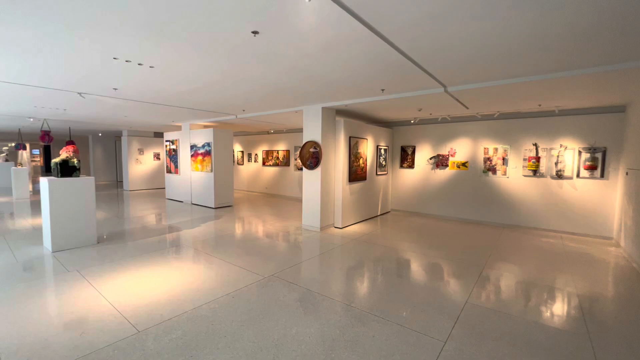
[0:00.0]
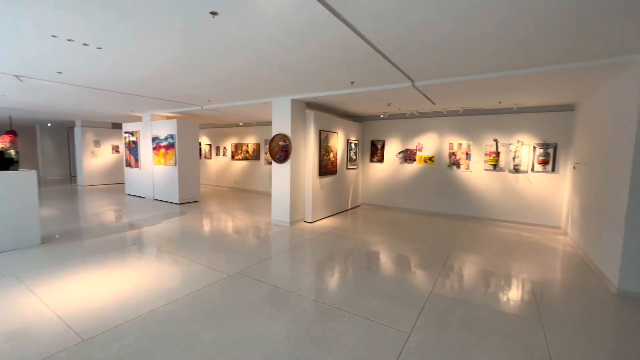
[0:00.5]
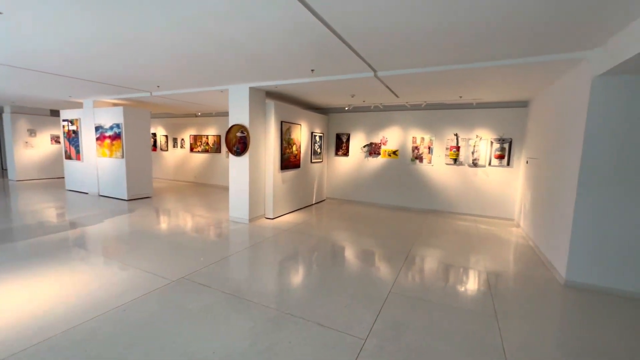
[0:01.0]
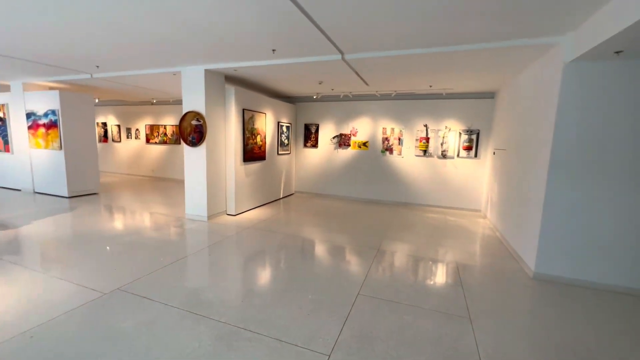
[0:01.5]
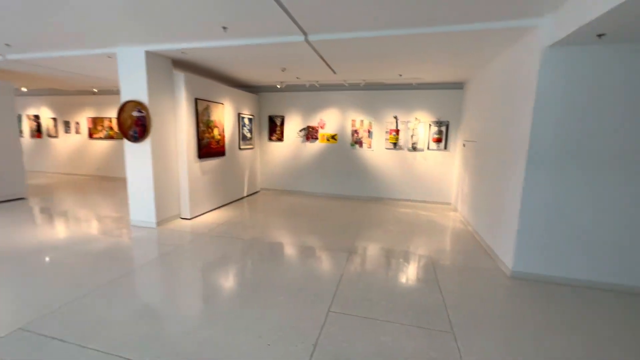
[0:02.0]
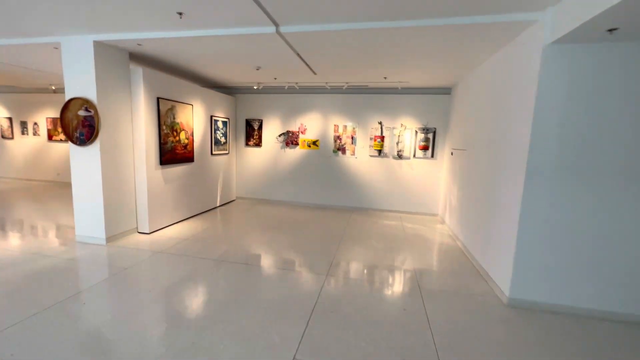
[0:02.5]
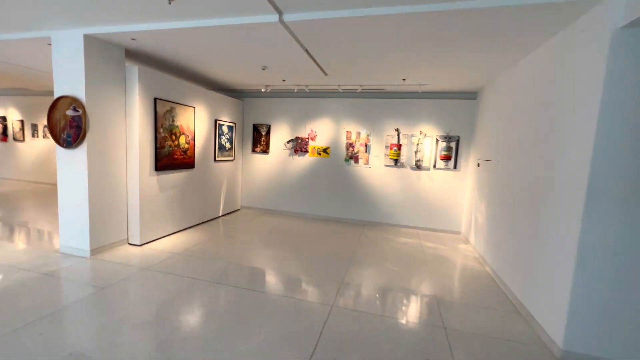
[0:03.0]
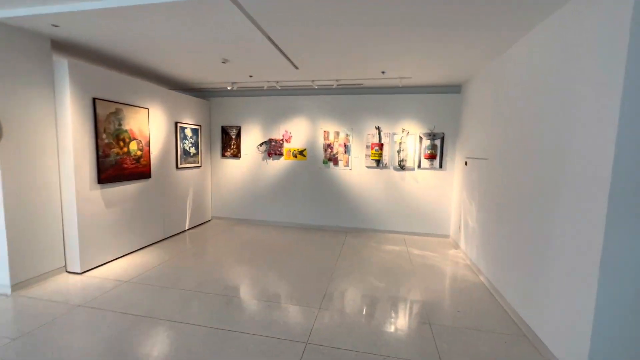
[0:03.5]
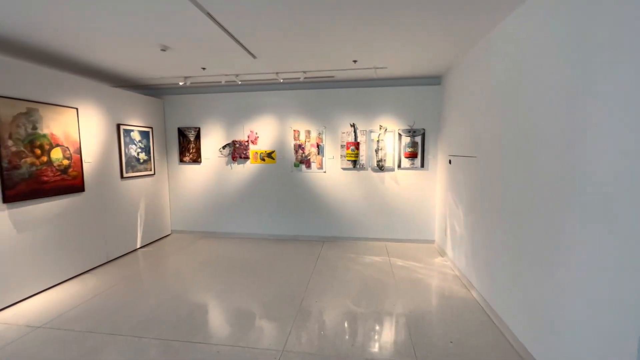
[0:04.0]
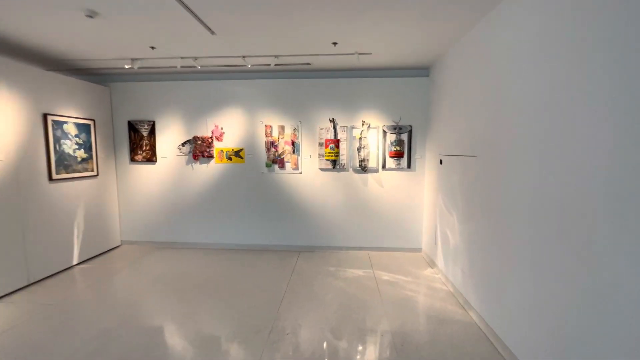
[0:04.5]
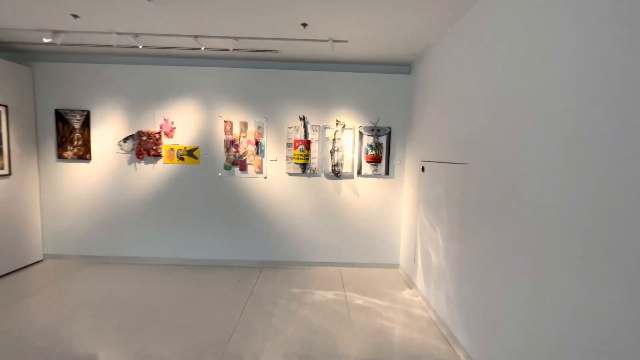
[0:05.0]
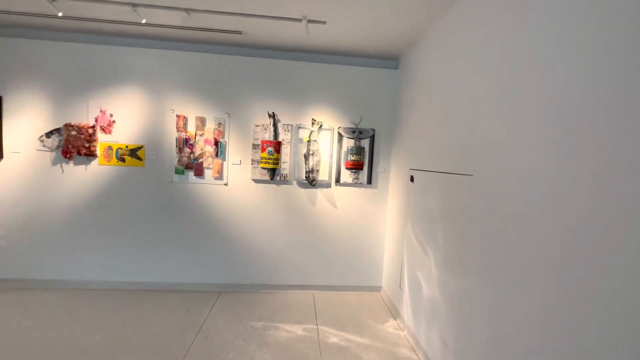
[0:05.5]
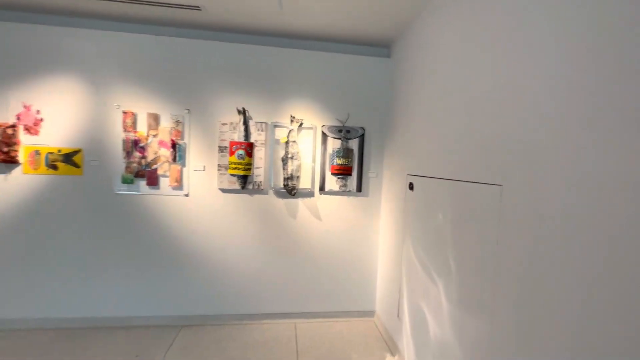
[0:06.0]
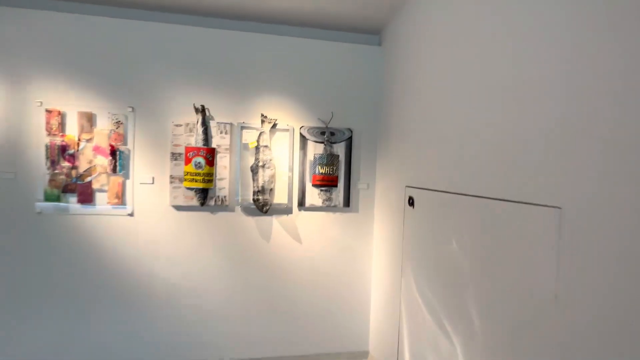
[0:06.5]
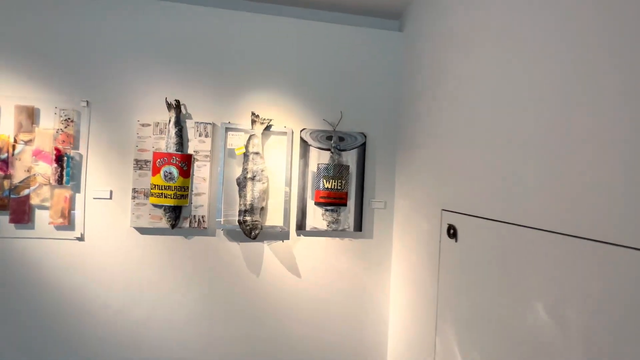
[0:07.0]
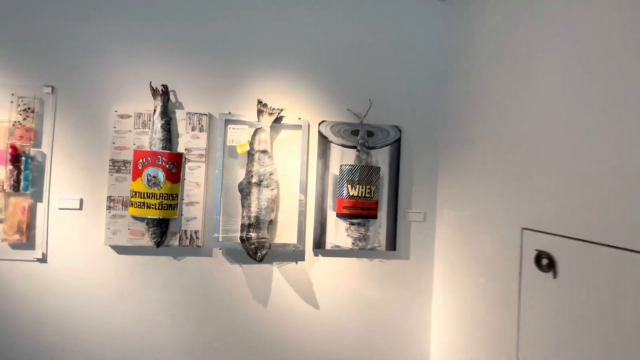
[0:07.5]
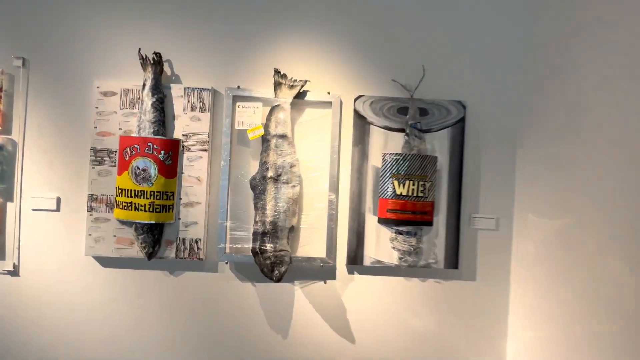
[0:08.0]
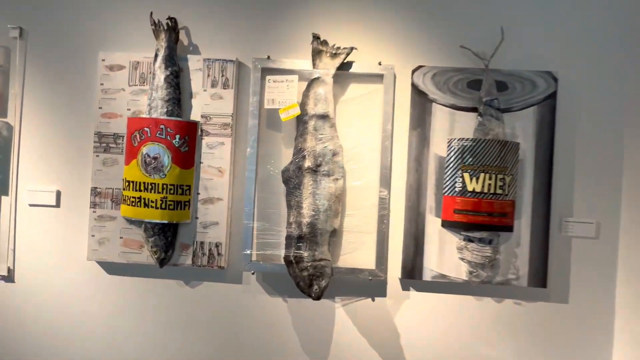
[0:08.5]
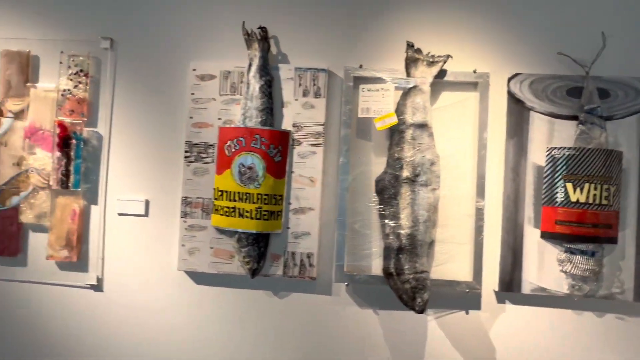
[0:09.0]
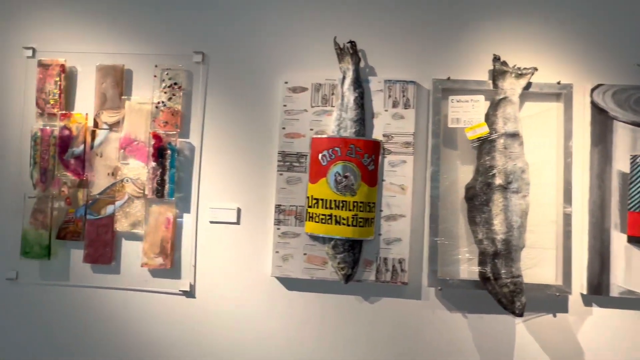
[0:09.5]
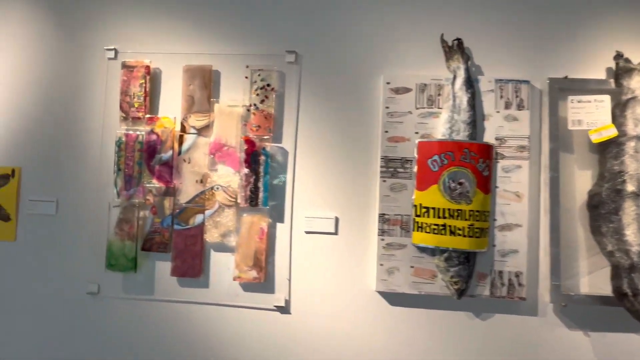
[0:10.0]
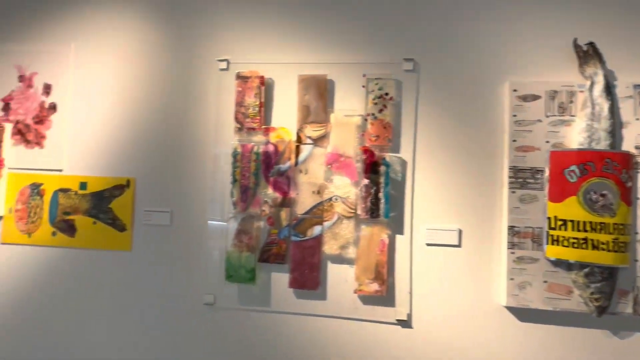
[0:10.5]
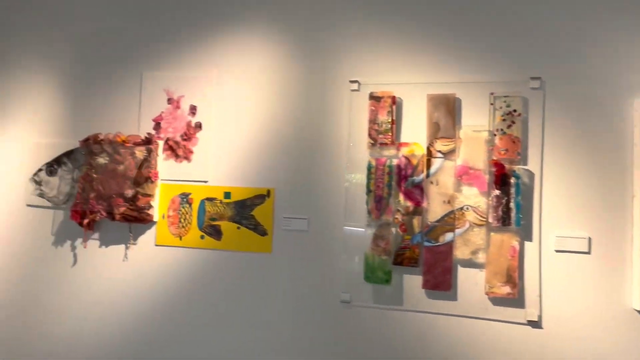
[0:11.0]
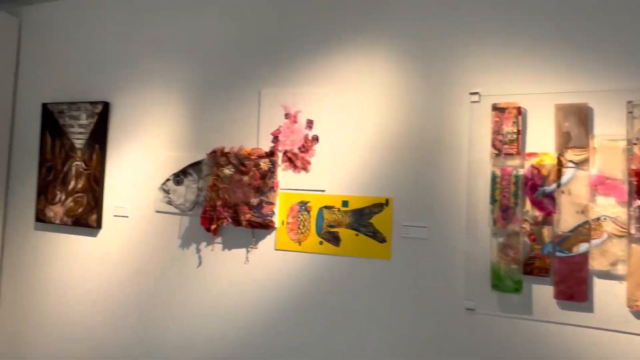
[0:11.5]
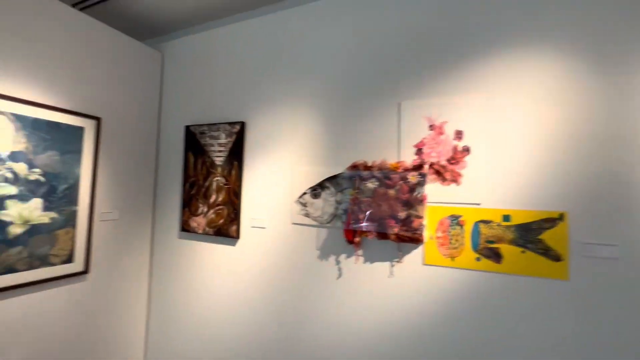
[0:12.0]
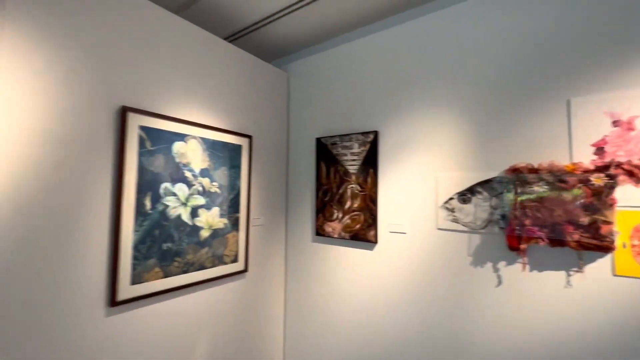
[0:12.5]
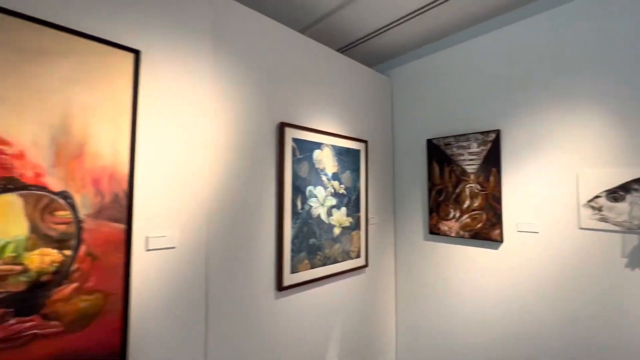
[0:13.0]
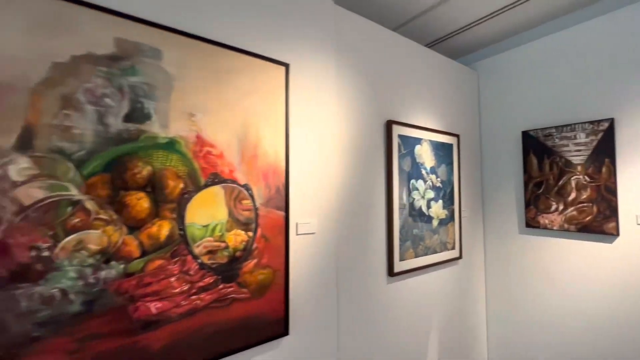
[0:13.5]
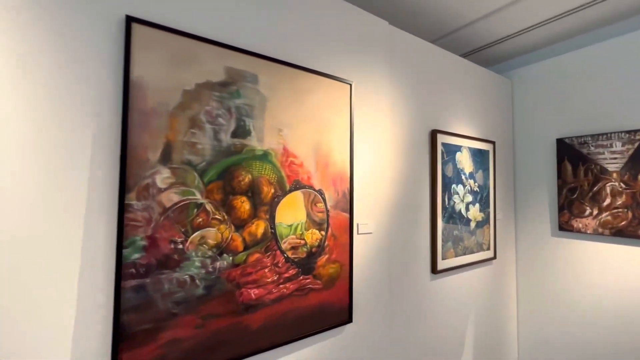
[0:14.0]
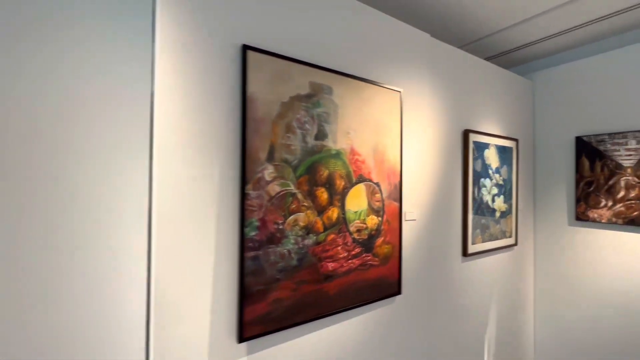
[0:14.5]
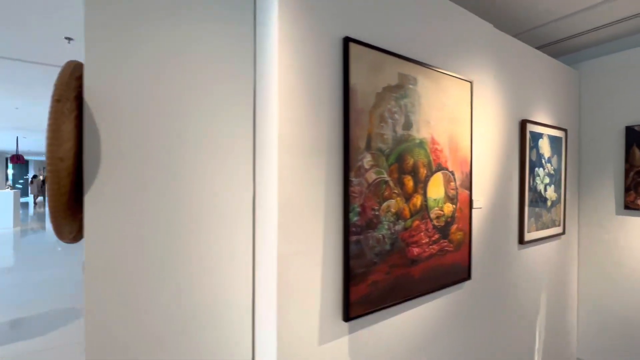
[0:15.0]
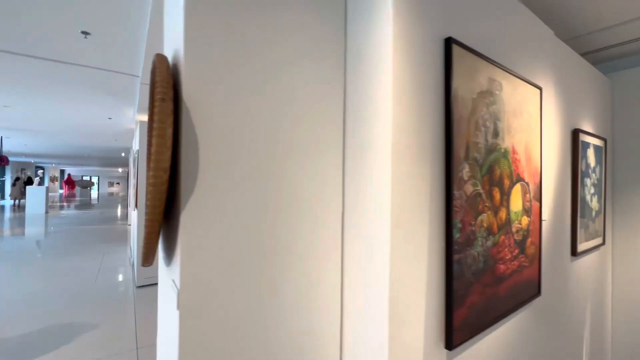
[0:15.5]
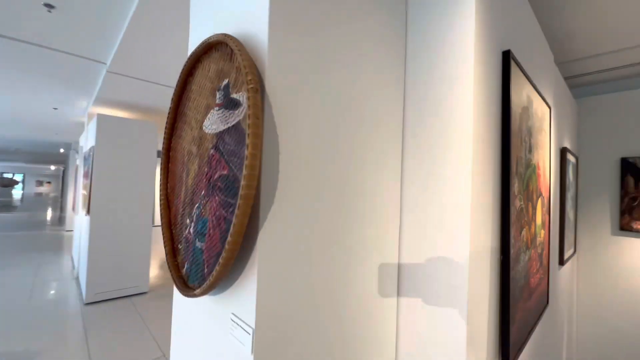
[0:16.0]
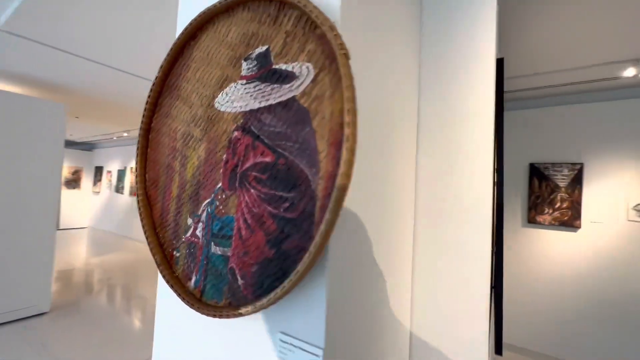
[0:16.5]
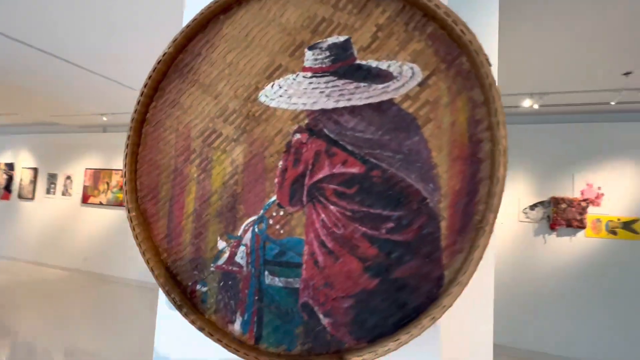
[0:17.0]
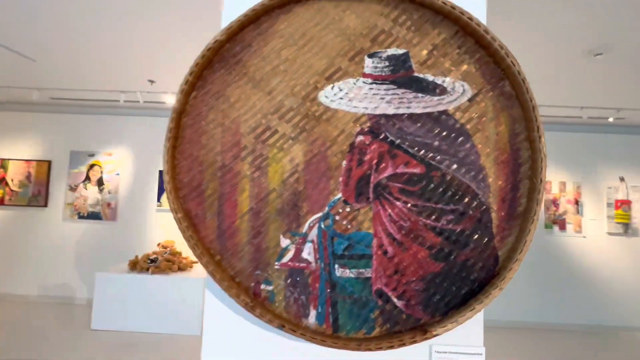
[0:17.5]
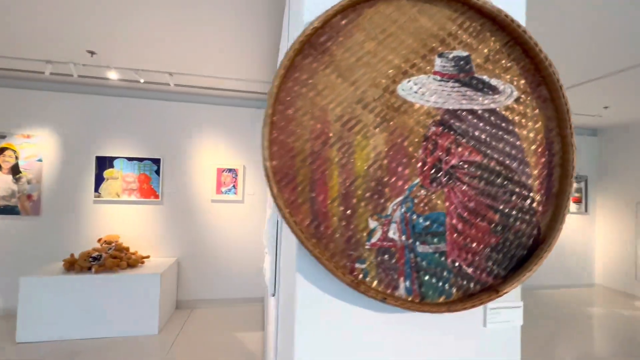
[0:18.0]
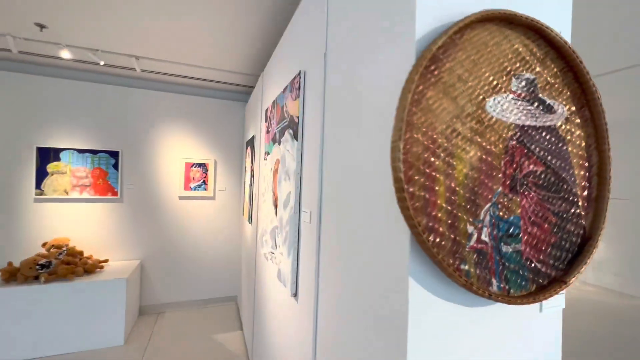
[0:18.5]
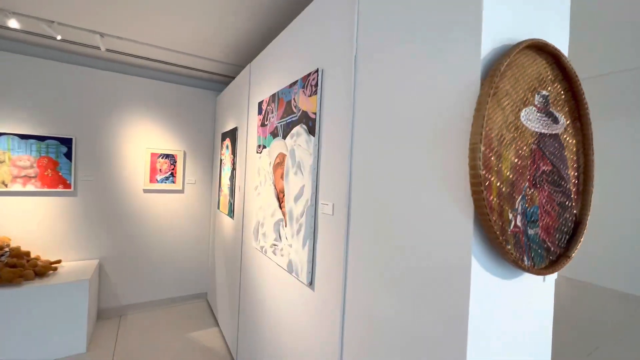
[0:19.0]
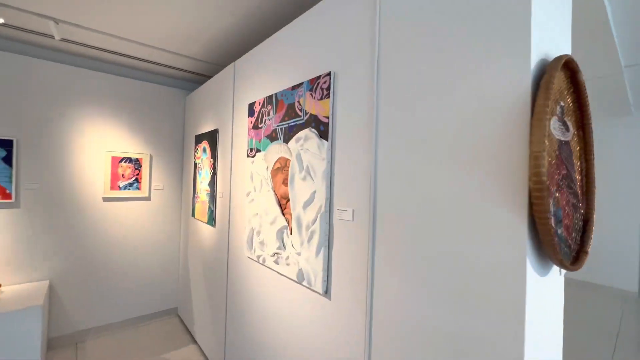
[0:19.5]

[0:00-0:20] The video appears to show a modern art gallery with rooms painted white. The art is very unusual. The first pieces are fish hanging on a picture, a collection that is like abstract art, kind of 3D, popping out from the picture. Next comes something that looks like a disc, resembling a plate hanging on the side wall. The gallery has white walls and white, very shiny floors, and the ceilings are not high. Only one room and the outside wall of the gallery are visible. The pictures are modern and contemporary, using bright colors, and they don't appear to be framed. Each has a light hanging over it, illuminating the picture. Some other pictures do have frames and glass.